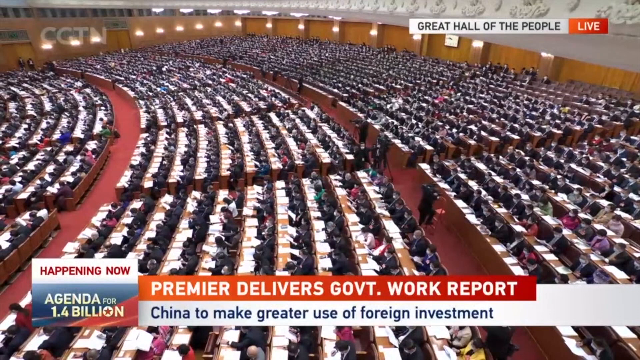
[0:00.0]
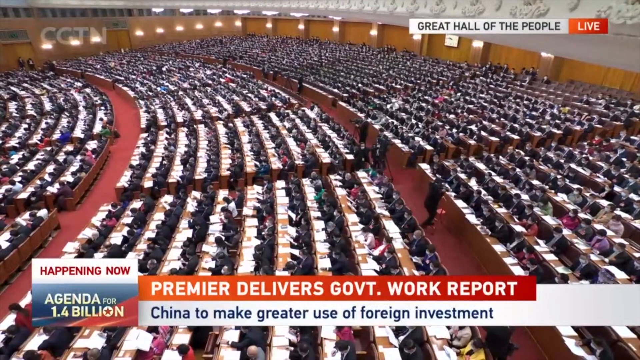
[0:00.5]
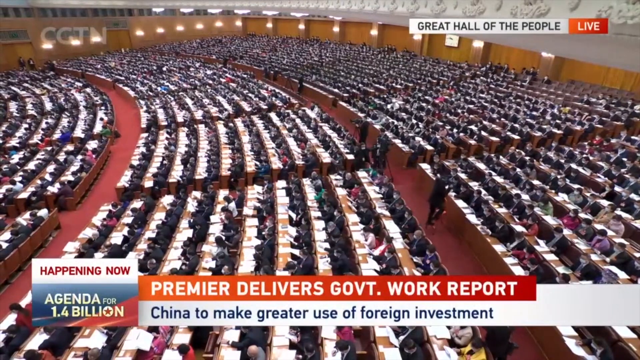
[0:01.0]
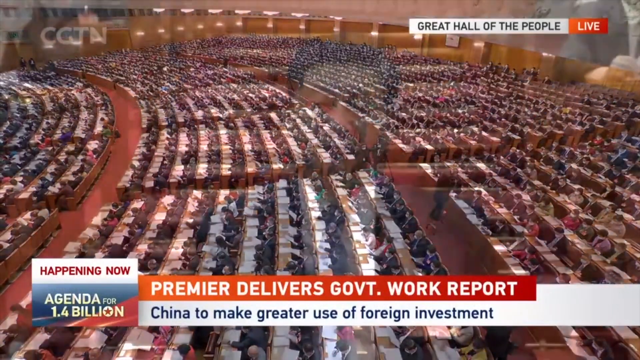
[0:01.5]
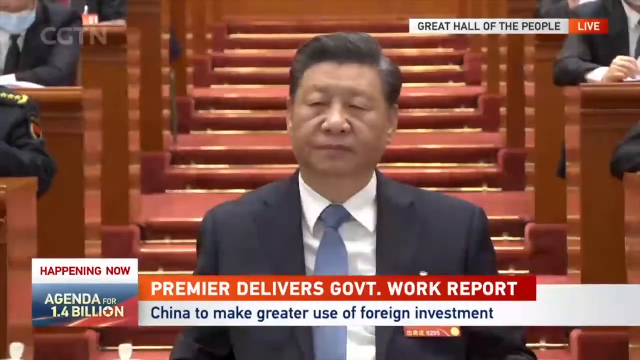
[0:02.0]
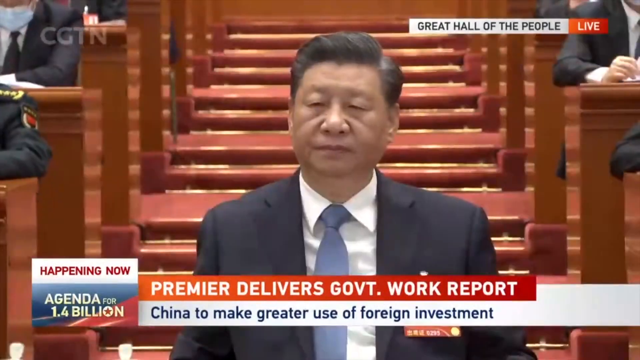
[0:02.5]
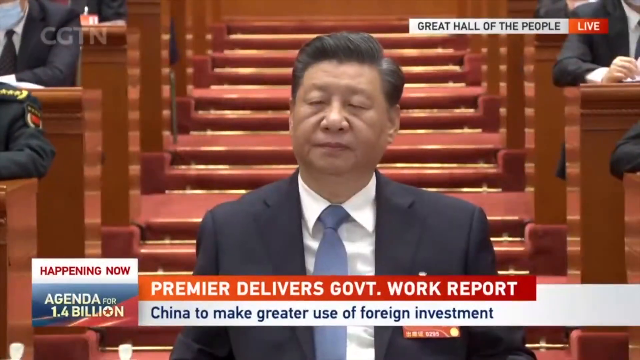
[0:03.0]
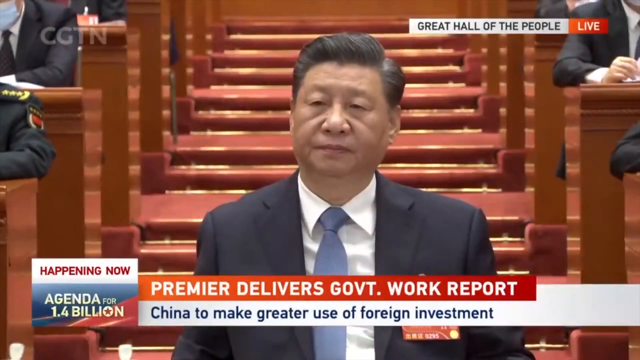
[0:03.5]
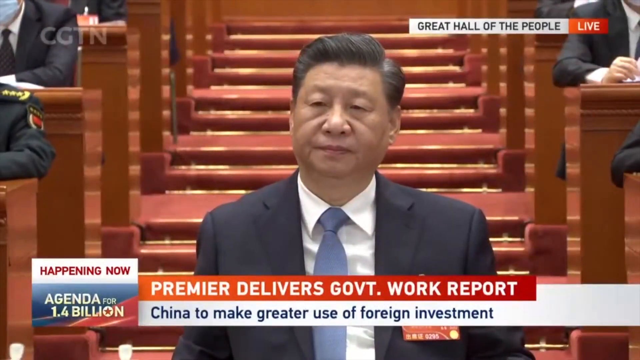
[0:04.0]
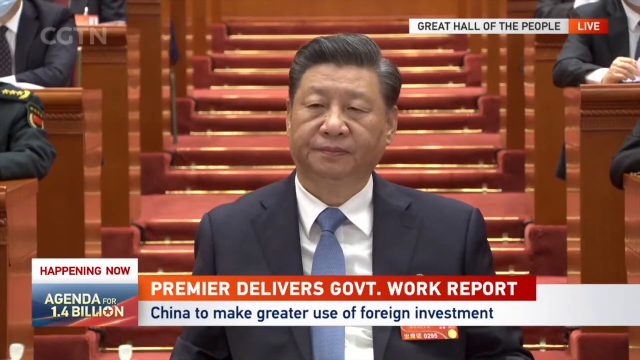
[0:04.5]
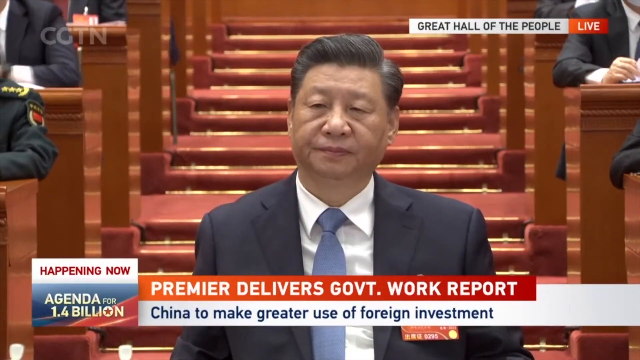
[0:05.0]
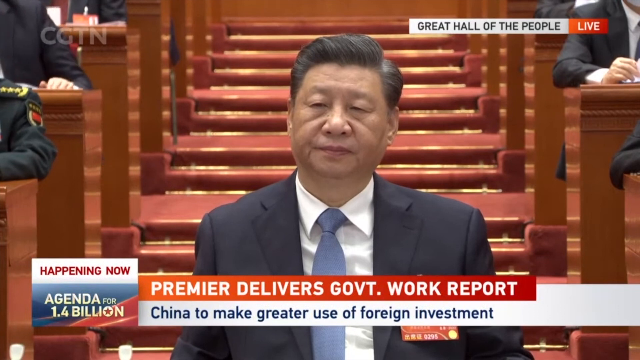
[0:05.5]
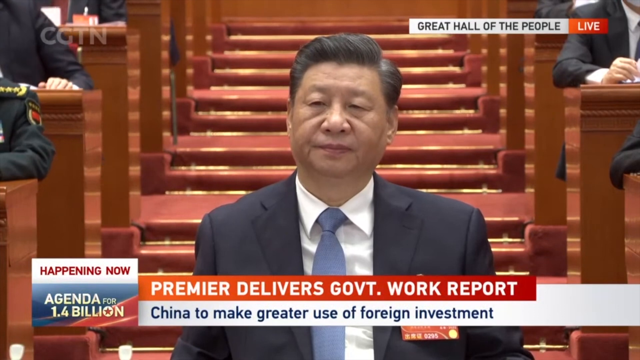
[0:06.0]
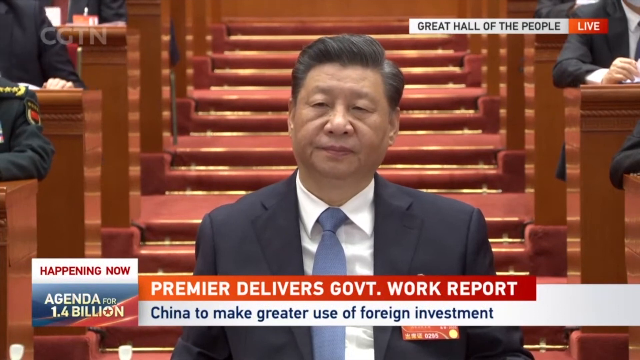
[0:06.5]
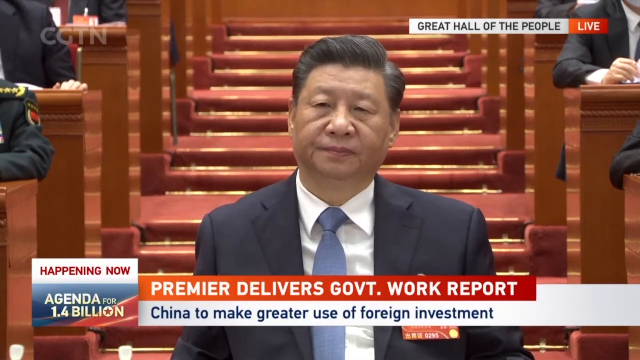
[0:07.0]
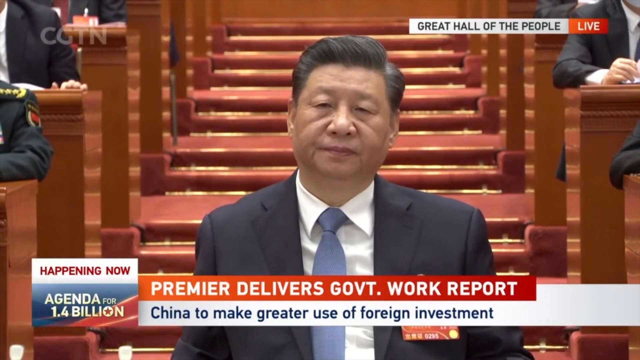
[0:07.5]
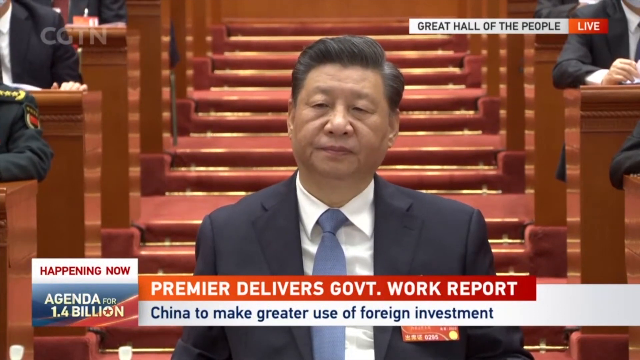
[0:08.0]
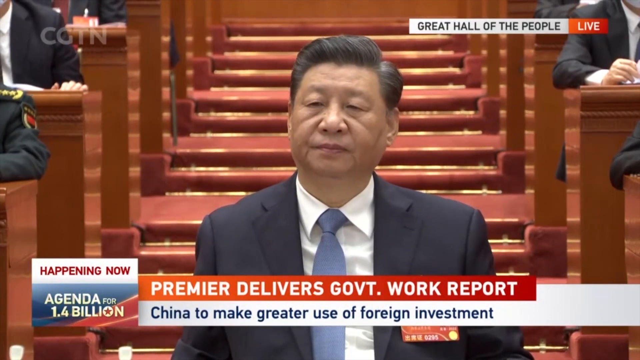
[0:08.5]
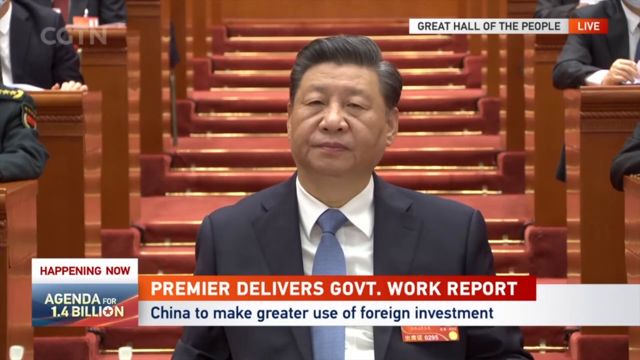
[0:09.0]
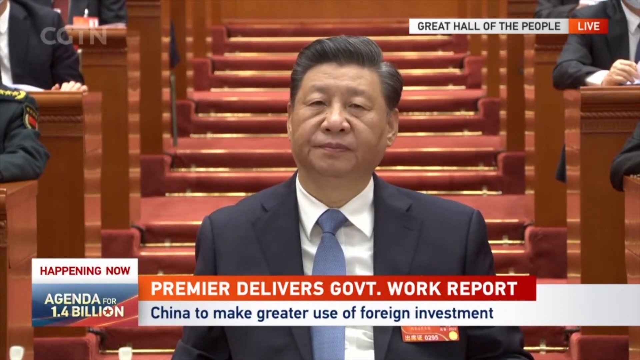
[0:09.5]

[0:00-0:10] The video opens with an overview of a government office, where many rows of people sit at their desks. In the upper right-hand corner the screen reads "Great Hall of the People live," and in the upper left-hand corner is "CCTN." A banner at the bottom says "China to make greater use of foreign investment," and in the lower left-hand corner is "Happening Now Agenda for $1.4 billion." Next comes a close-up of a man in a dark blazer and light blue tie. He is standing between the rows of desks with people, shown from the chest up, standing right in front of a stairway.